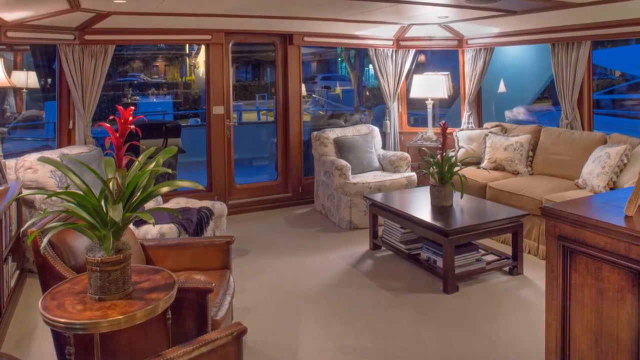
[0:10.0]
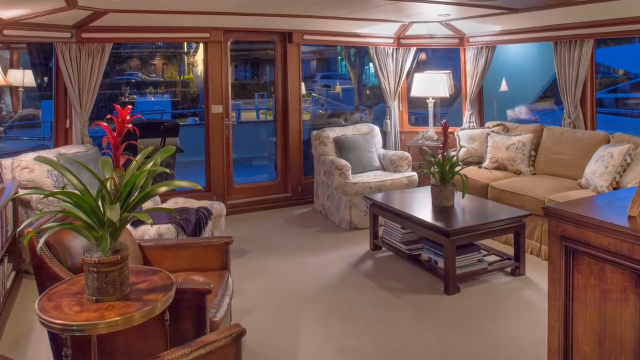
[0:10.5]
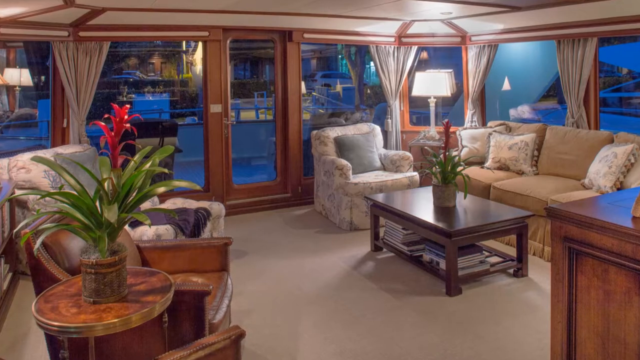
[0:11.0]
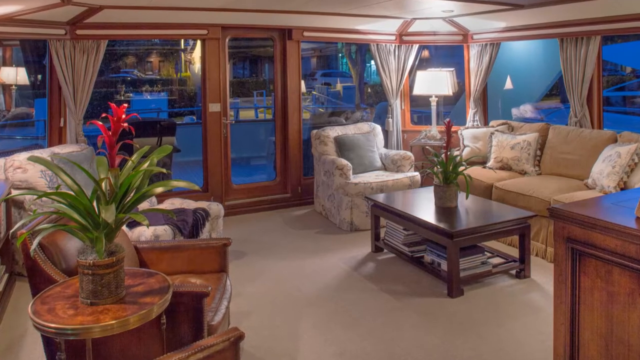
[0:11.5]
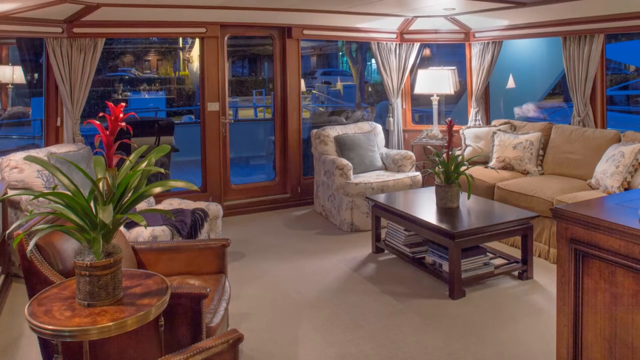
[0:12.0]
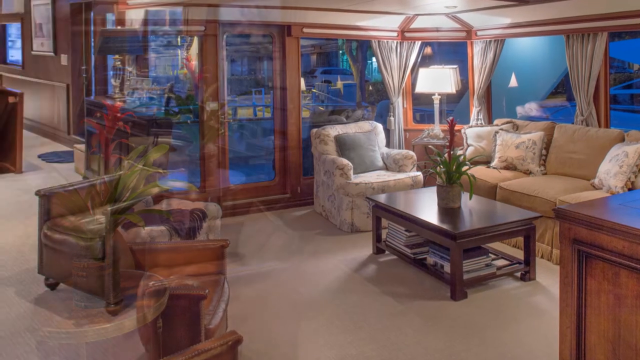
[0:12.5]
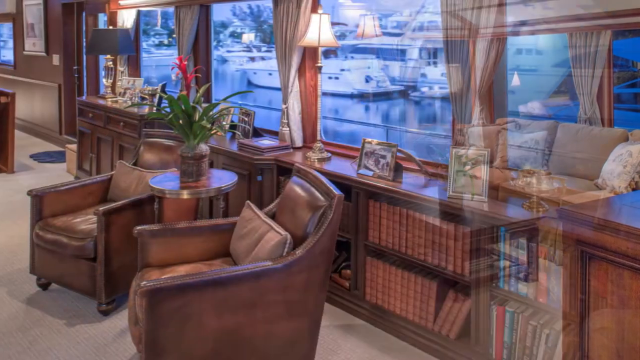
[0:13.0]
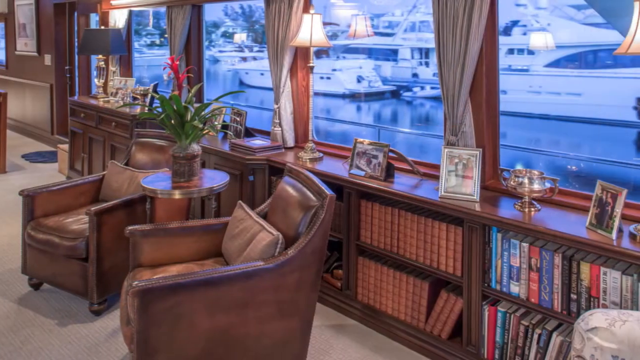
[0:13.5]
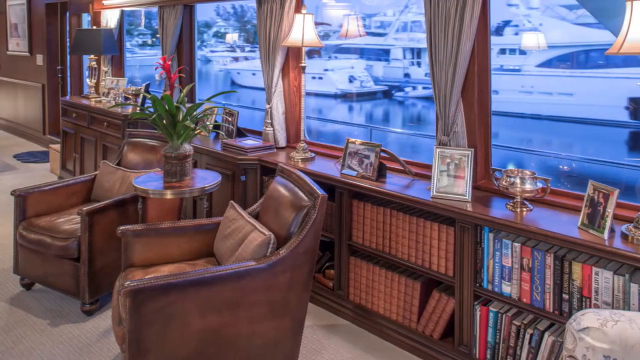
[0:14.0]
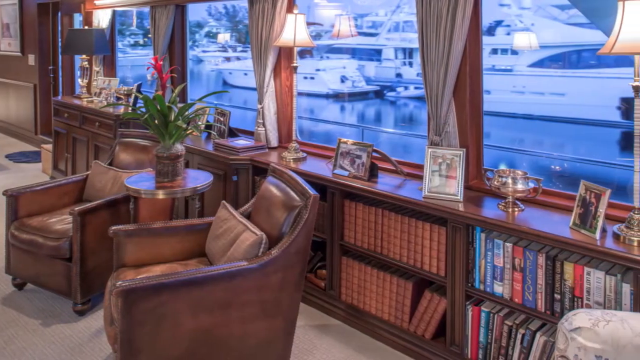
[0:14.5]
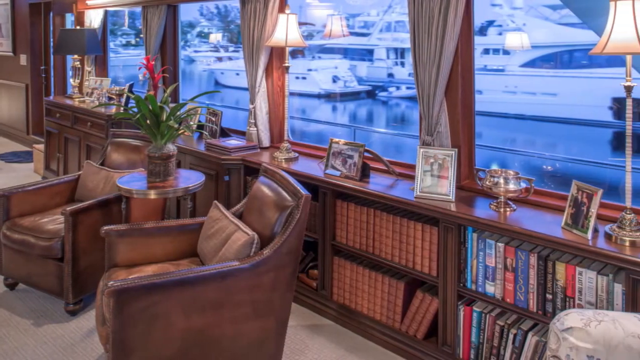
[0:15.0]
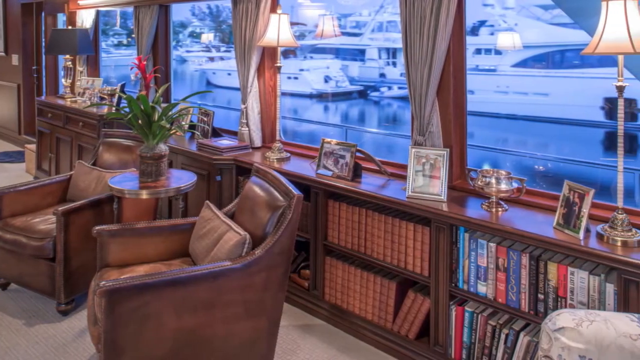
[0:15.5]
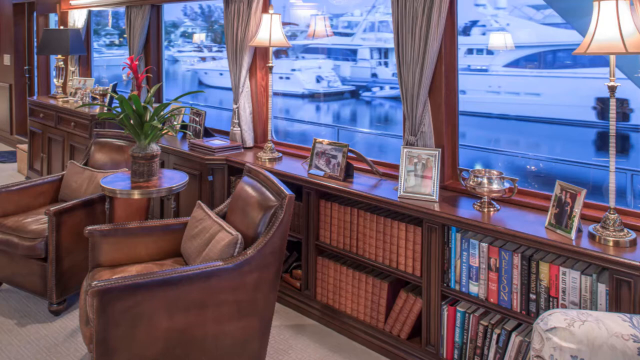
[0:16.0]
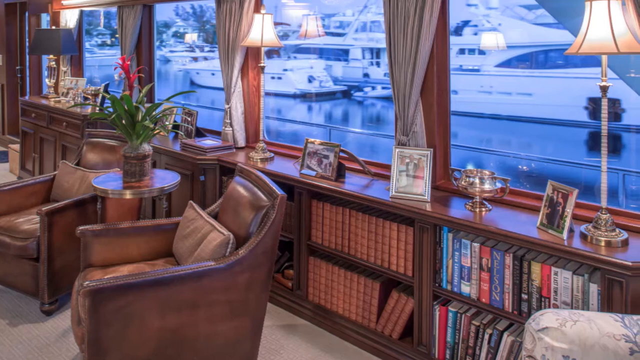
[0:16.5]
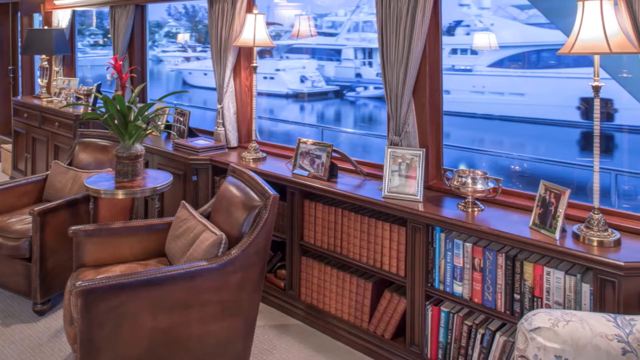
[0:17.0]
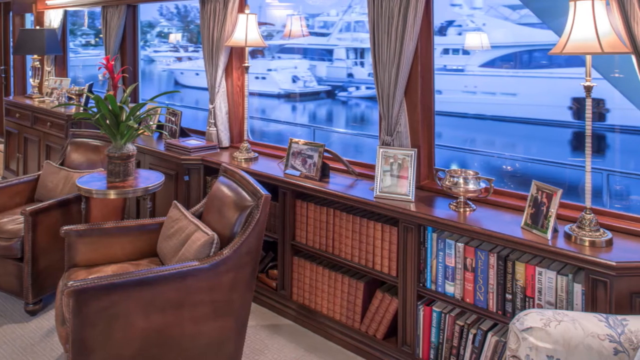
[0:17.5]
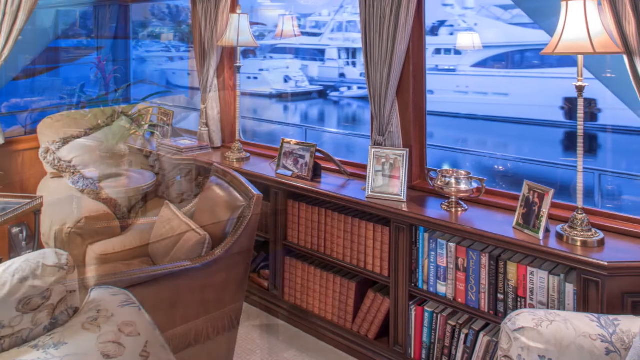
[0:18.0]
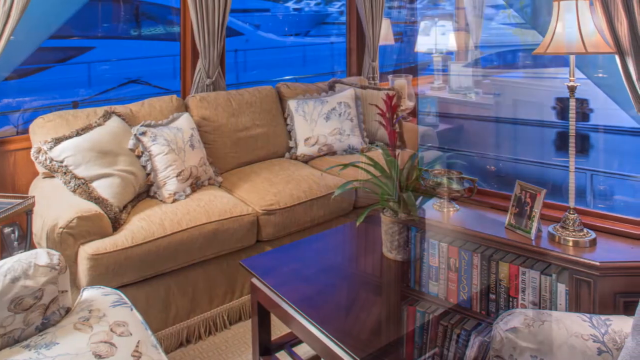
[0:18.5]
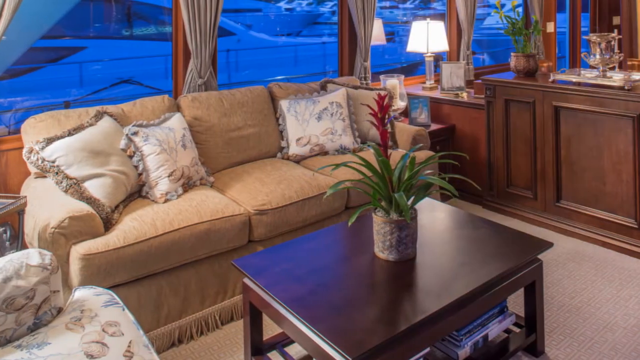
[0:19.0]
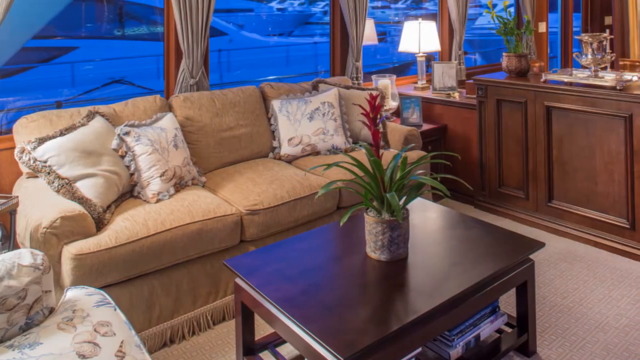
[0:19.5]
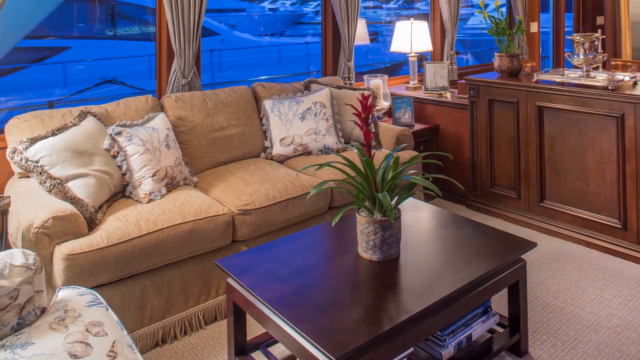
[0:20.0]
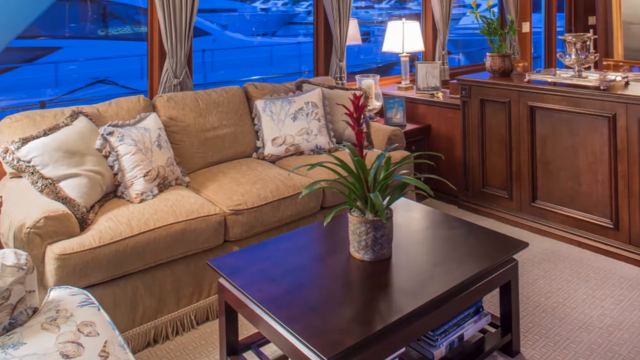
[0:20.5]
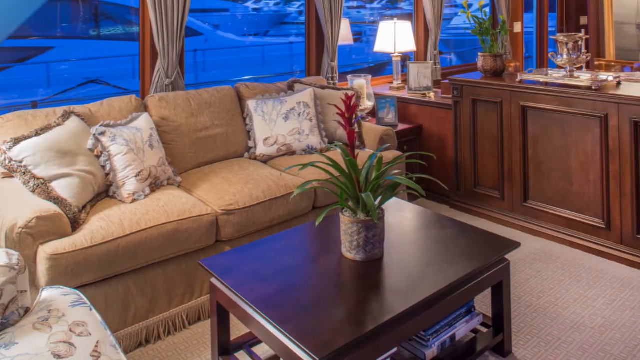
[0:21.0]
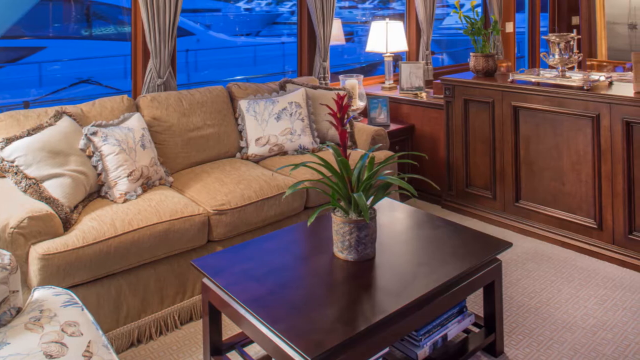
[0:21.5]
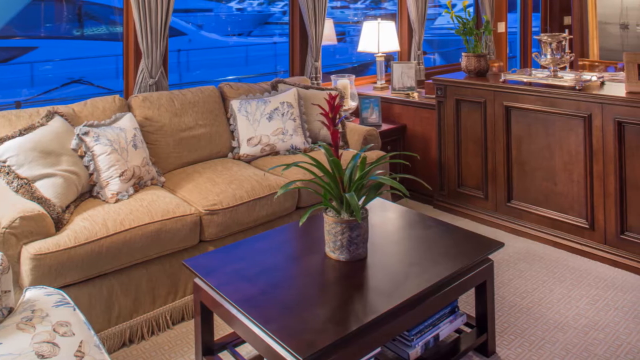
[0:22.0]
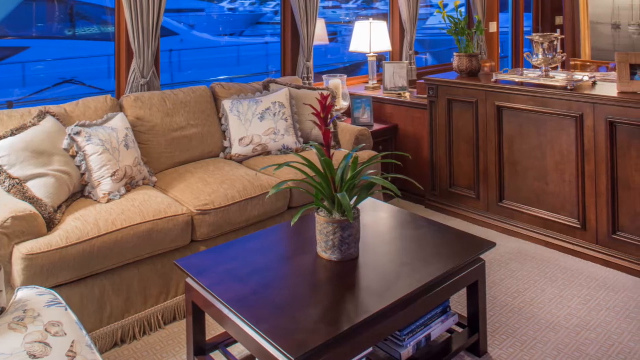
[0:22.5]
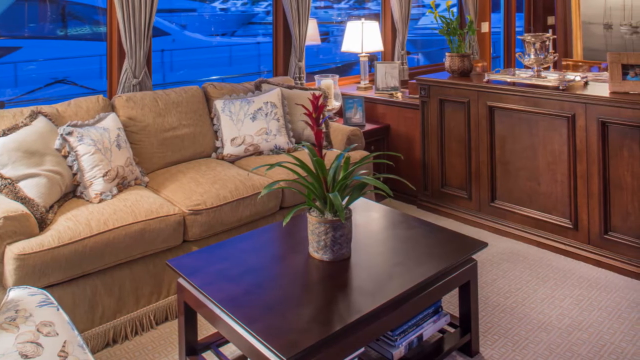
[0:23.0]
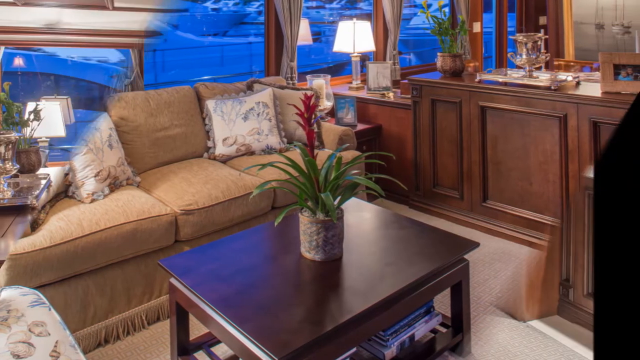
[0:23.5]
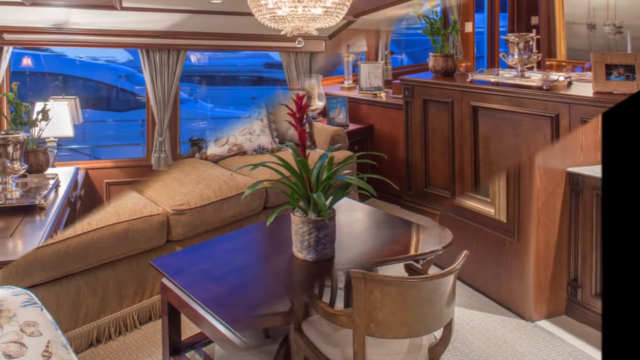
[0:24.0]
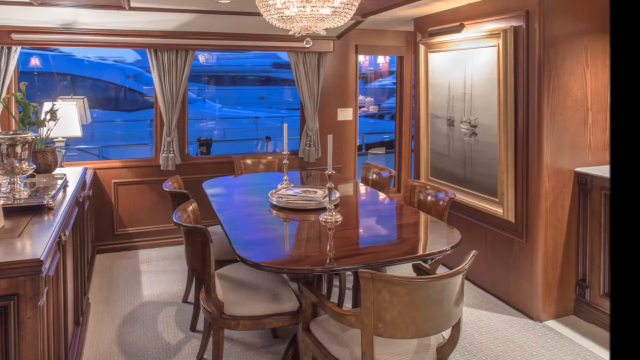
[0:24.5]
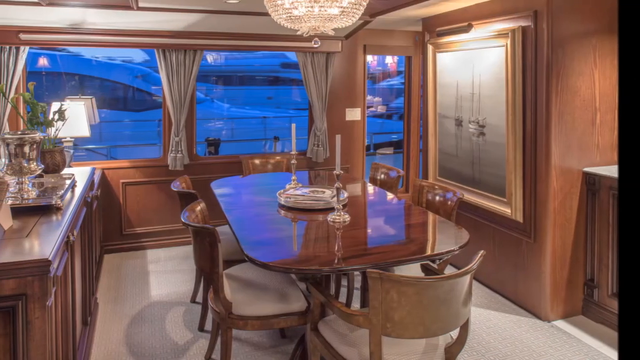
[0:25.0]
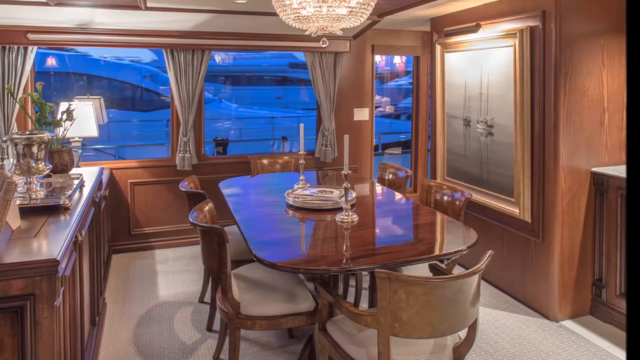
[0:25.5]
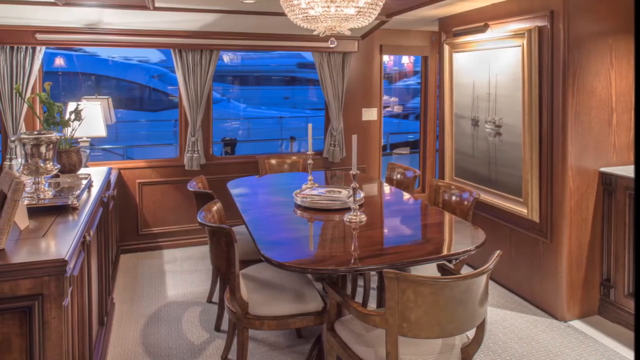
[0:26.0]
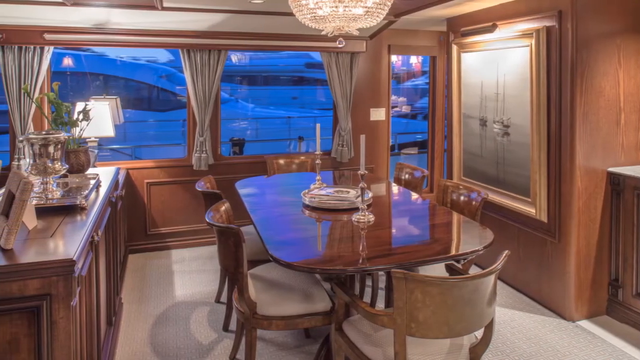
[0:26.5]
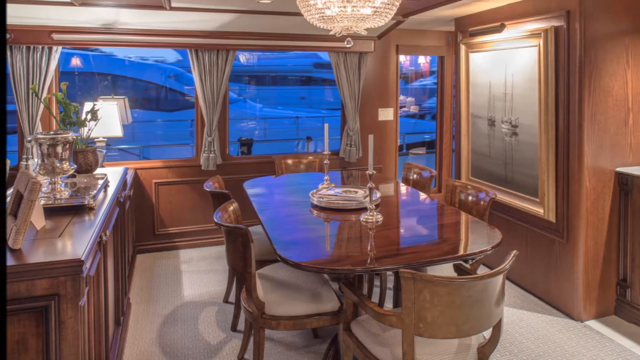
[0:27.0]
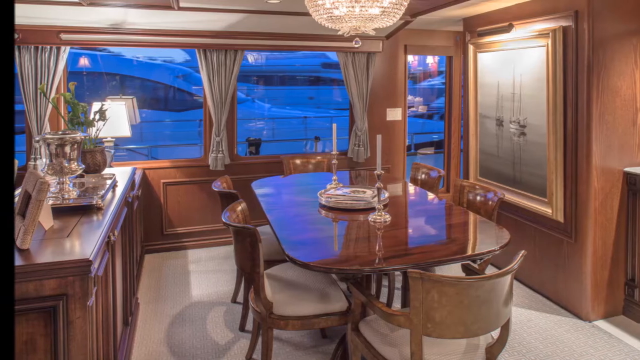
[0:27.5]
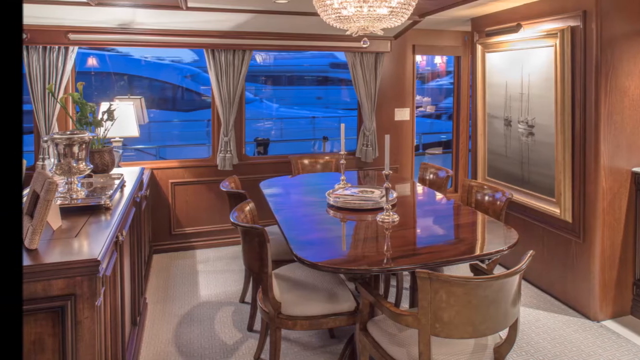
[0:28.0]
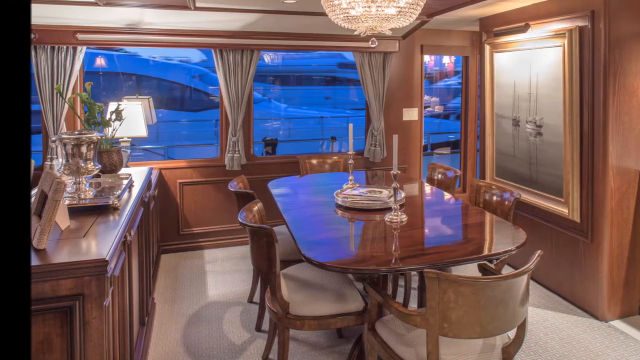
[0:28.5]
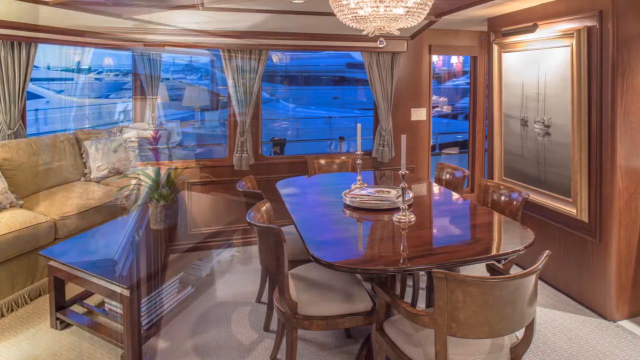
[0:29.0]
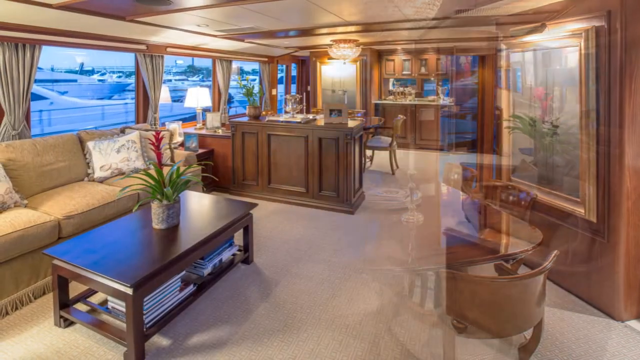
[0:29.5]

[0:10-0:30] Another angle of the living room shows built-in shelves, about two low-level shelves, with large window panes covered by curtains above them. There are two seats made of leather, and picture frames and other home decor are on top of the shelves. Through the window, a marina or harbor is visible with other yachts parked there. Another angle of the same living room follows, where there appears to be a bar area next to the three-seat sofa. The view then changes to the dining room, which is also surrounded by window panes and has a large glass door at the corner. The dining room is cozy and quite small but looks very elegant, with a chandelier over the dining table.